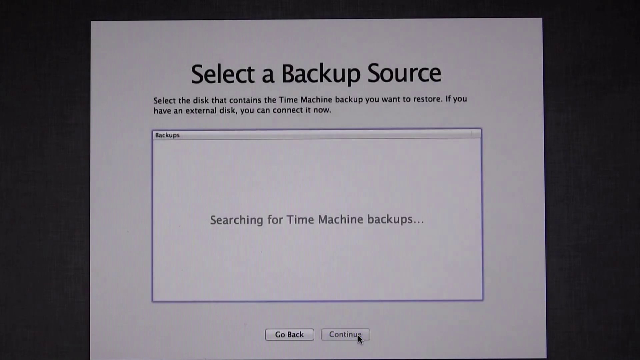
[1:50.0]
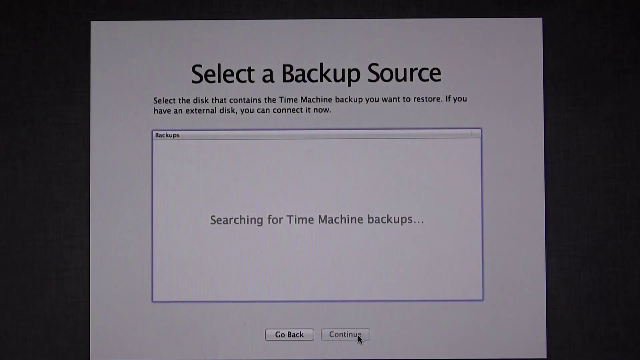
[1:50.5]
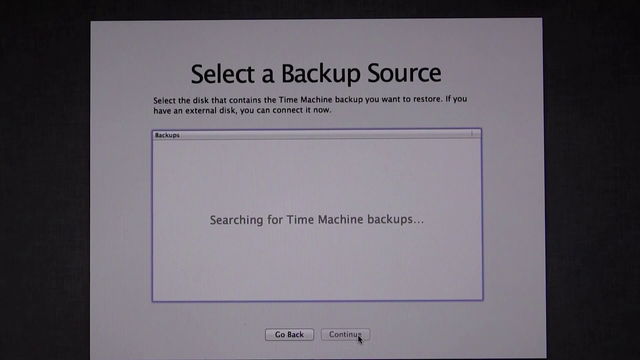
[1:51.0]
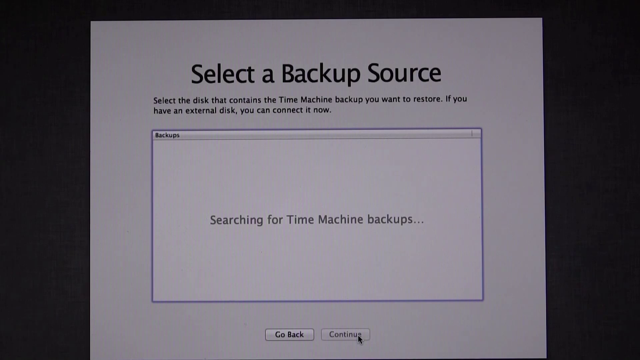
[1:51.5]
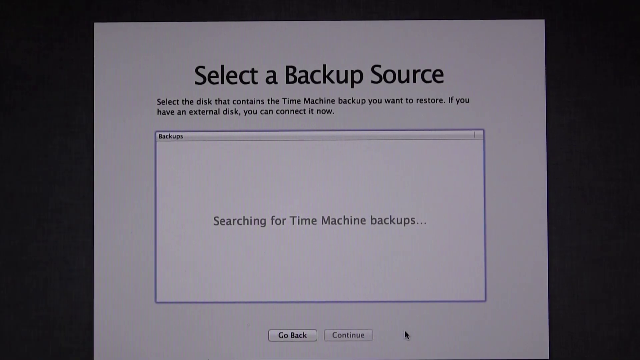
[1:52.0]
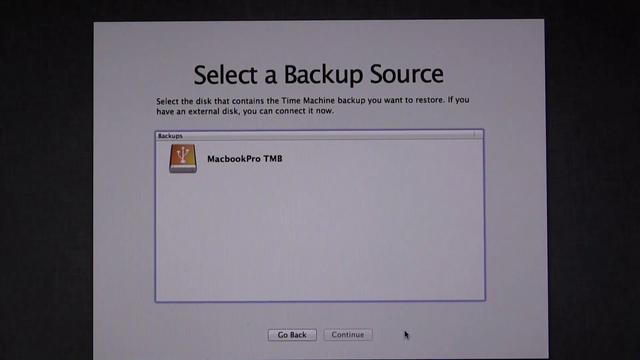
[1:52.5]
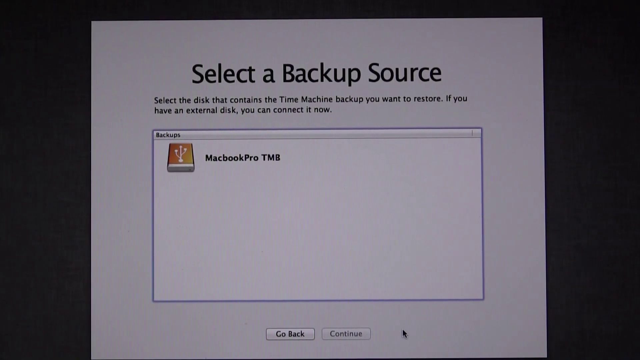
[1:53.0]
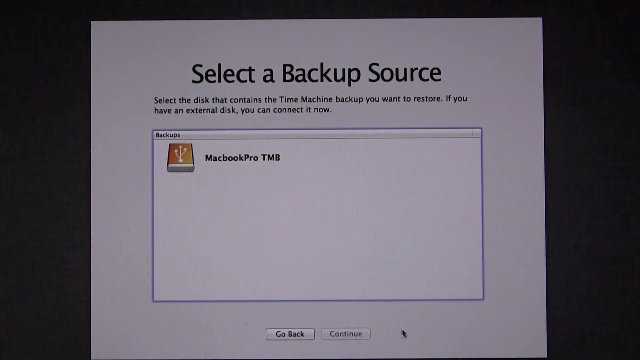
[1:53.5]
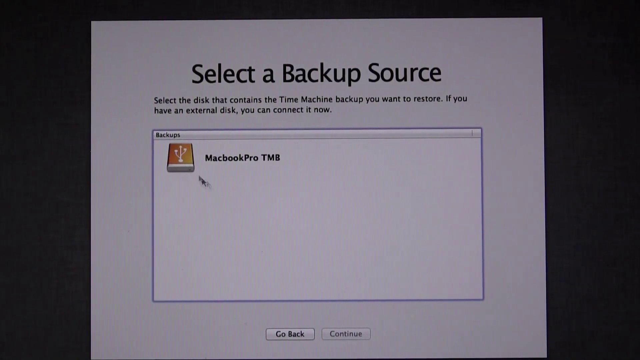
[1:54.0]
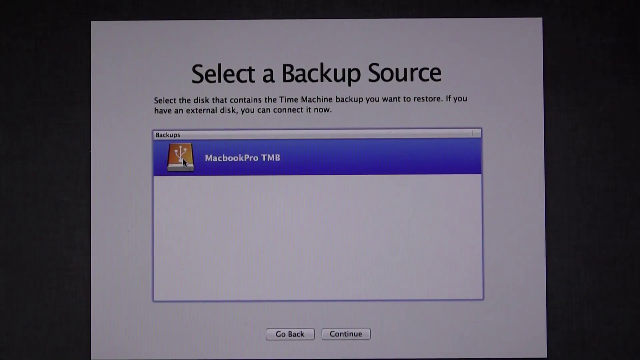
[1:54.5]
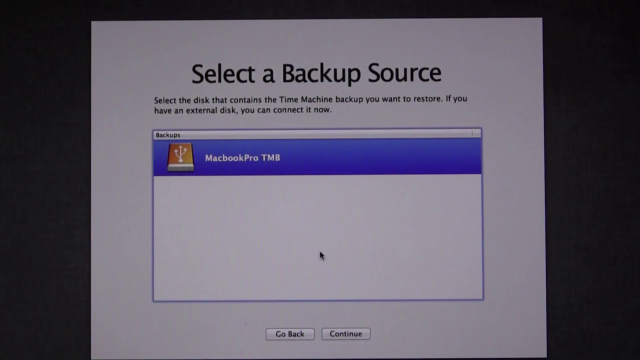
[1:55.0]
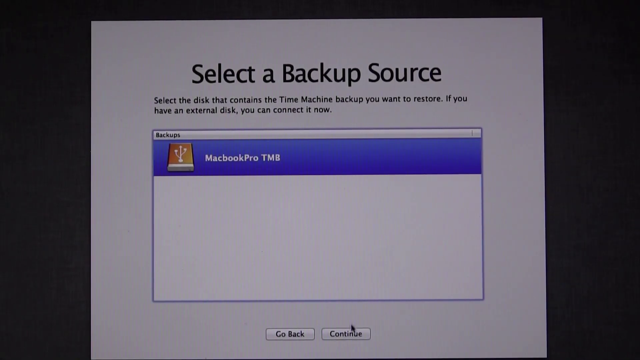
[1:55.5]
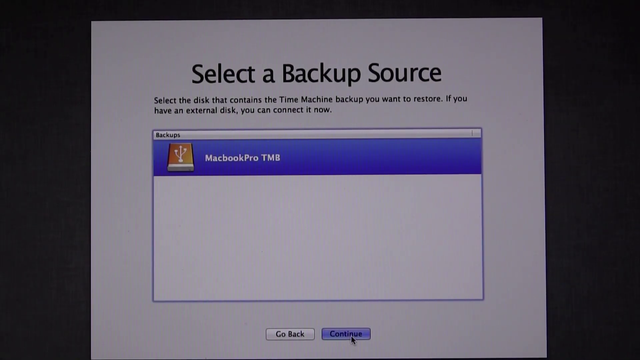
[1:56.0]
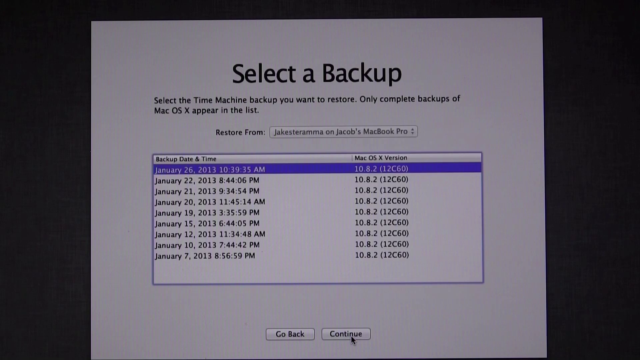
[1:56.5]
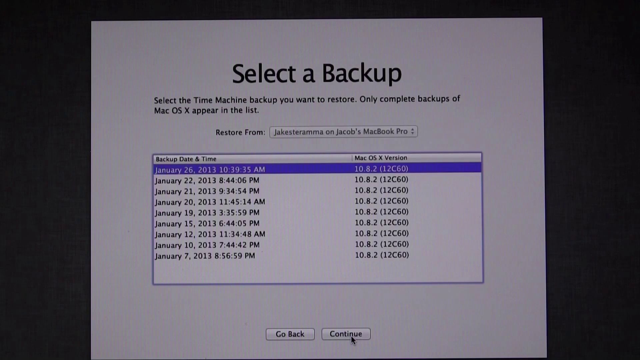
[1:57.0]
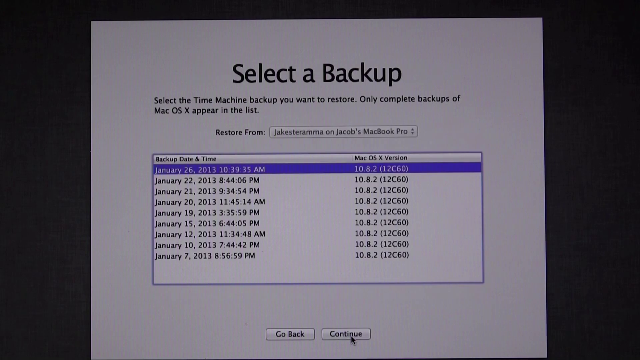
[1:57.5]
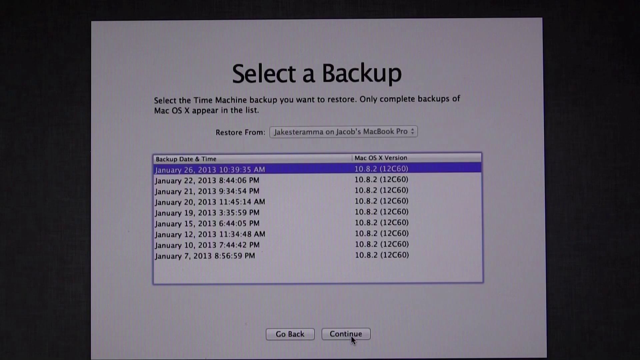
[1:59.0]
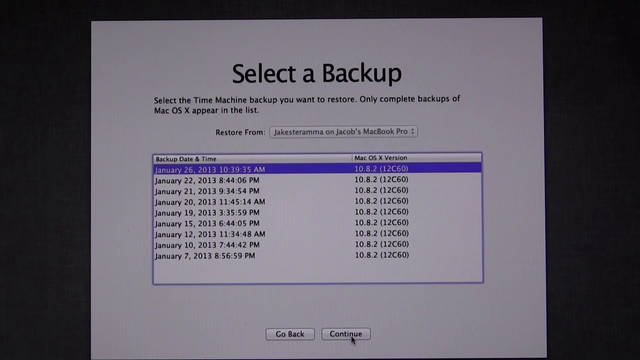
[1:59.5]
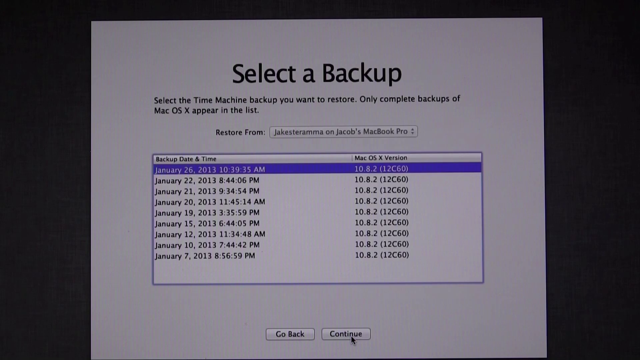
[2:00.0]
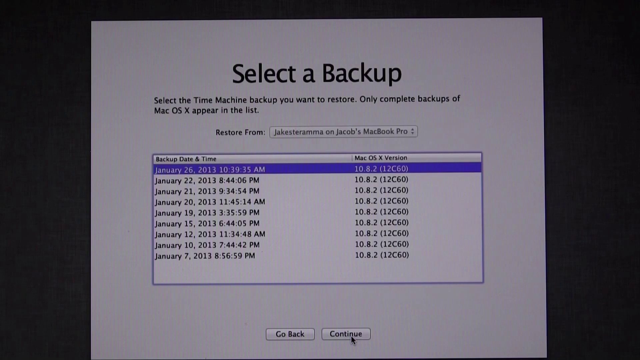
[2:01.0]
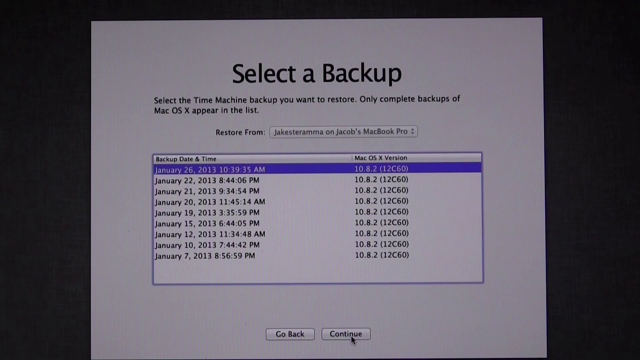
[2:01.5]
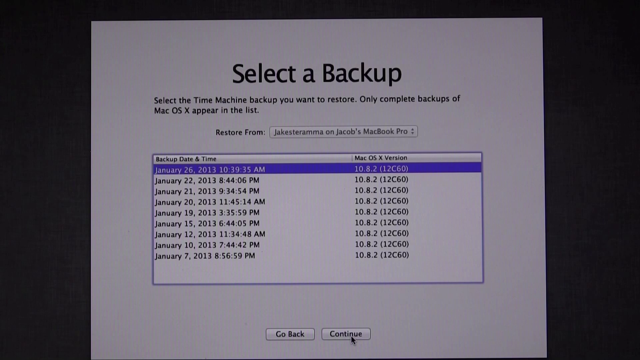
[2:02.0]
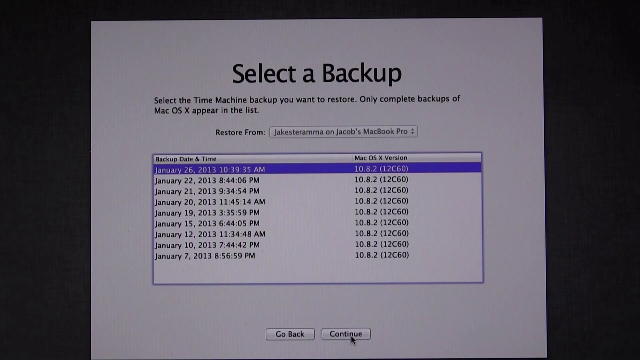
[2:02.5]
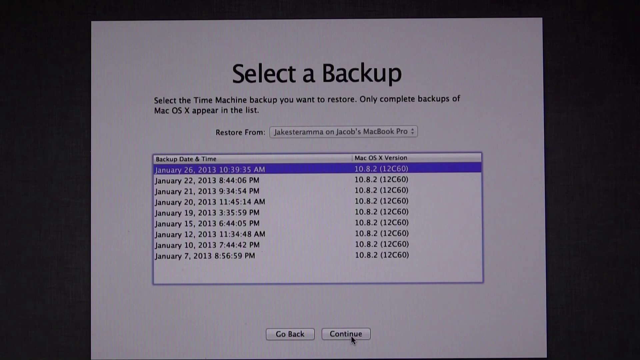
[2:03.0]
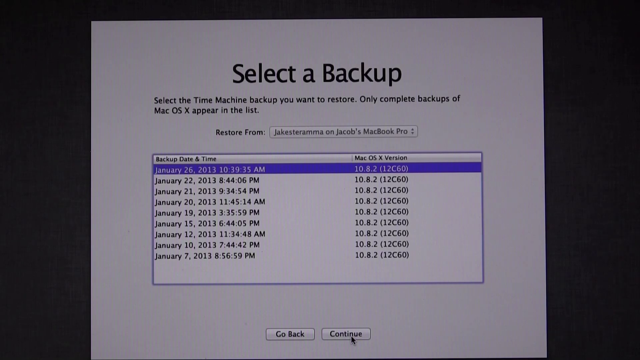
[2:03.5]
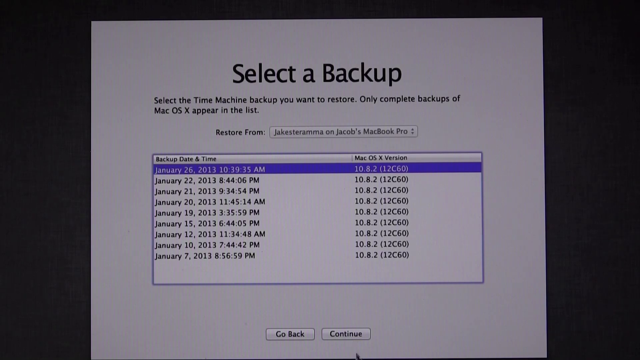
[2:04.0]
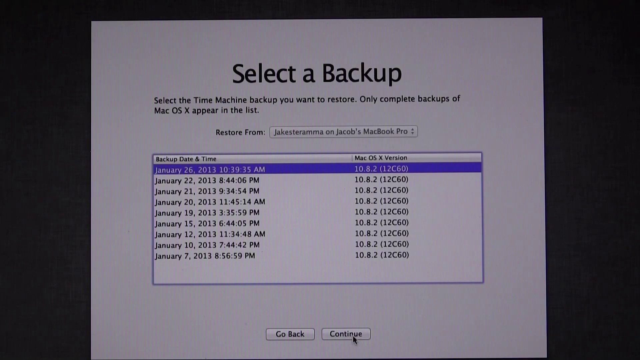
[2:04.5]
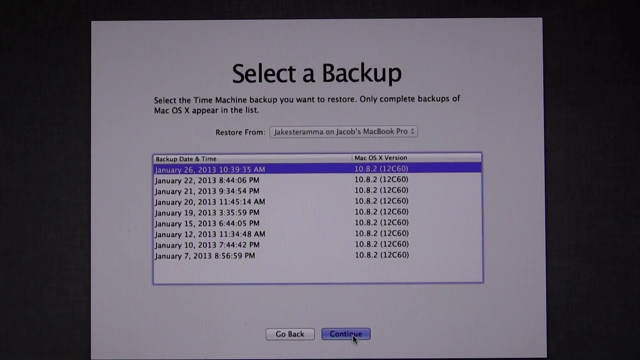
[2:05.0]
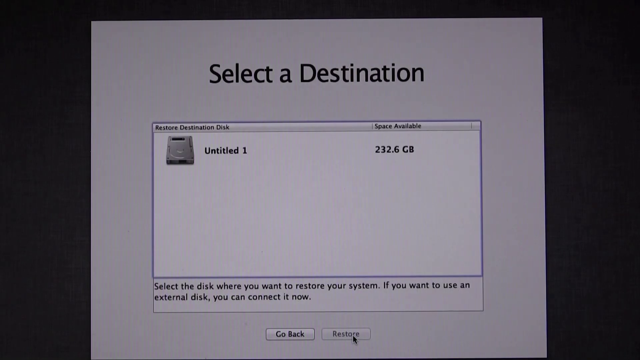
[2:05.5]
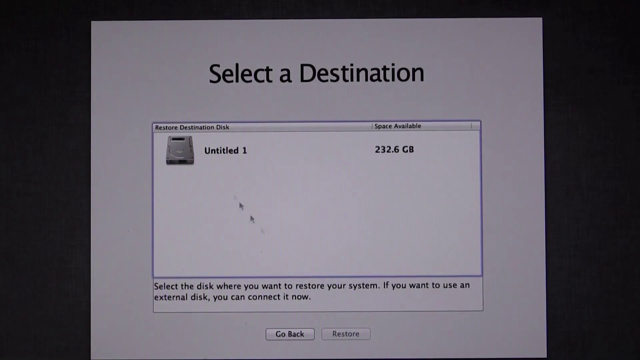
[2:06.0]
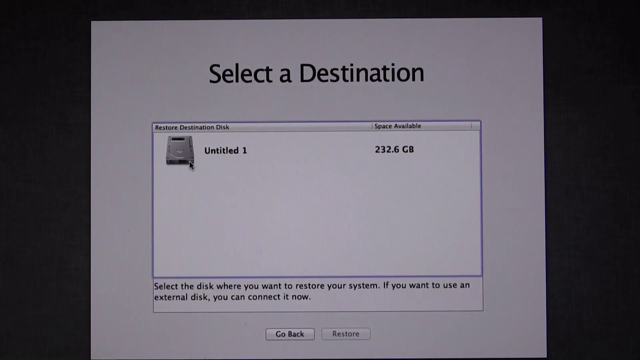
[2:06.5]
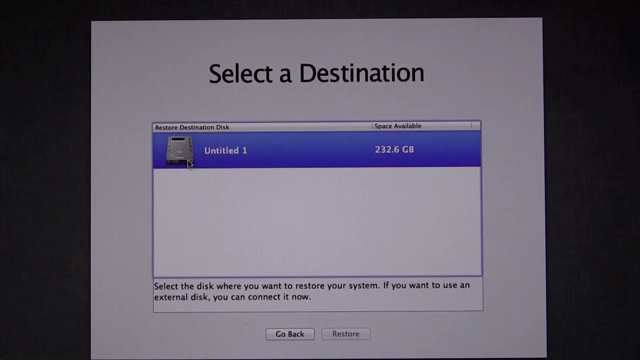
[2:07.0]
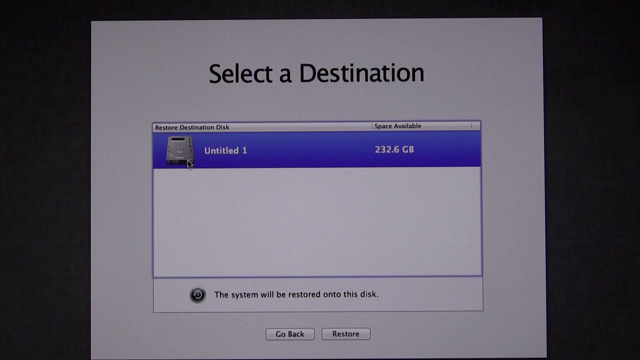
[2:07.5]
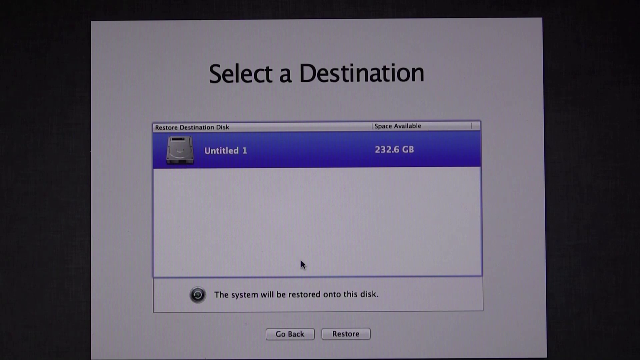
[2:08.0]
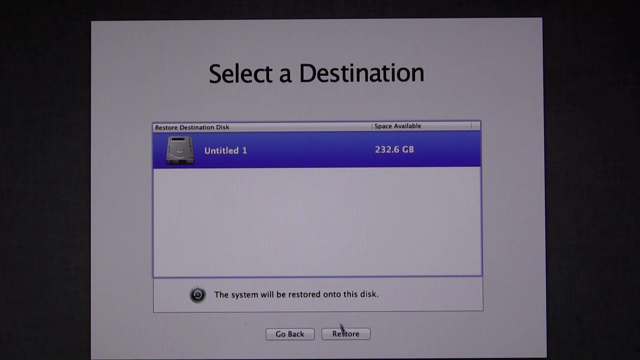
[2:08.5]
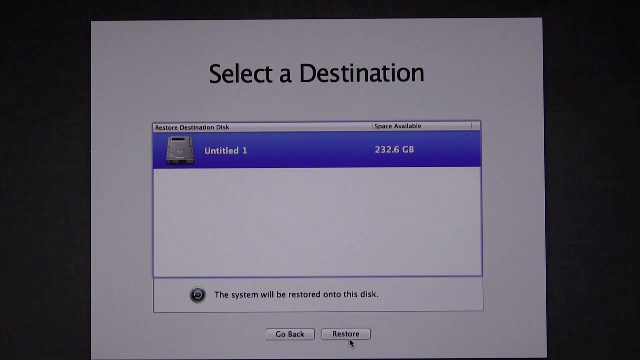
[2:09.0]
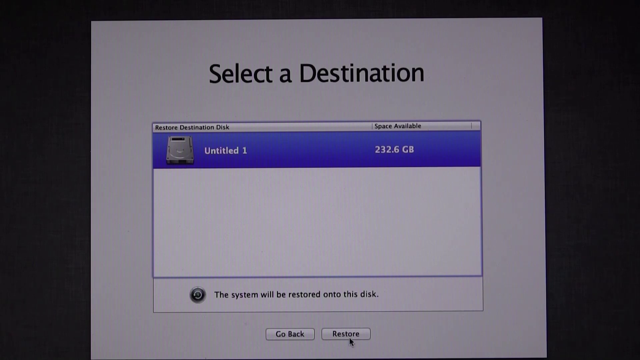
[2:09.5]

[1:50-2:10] The screen reads "select a backup source. Select a disk that contains the Time Machine backup you want to restore. If you have an external disk, you can connect to it now," and shows "searching for Time Machine backups." It lists "MacBook Pro TBM," and the person selects a date that looks like January 26th, 2013. An item labeled "Untitled" with 232.6 gigabytes is shown, and the screen is searching for Time Machine backups. The view is zoomed in on the computer screen, with a black backdrop.